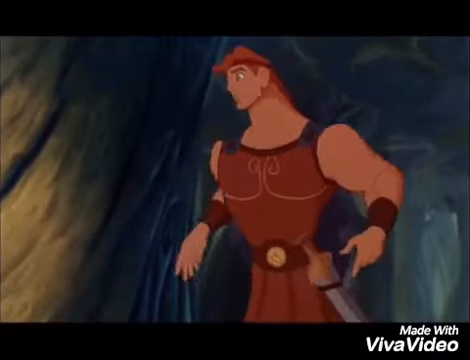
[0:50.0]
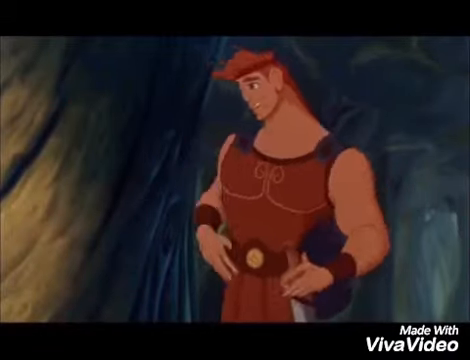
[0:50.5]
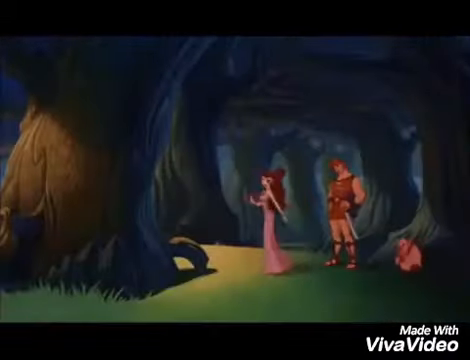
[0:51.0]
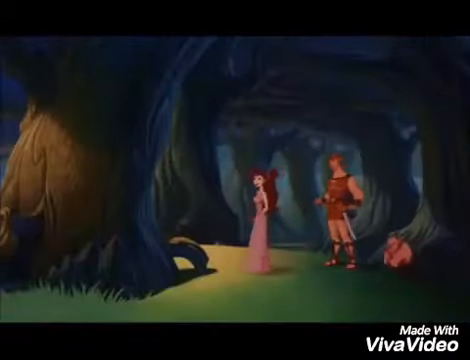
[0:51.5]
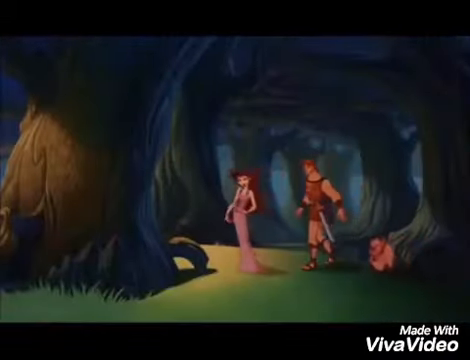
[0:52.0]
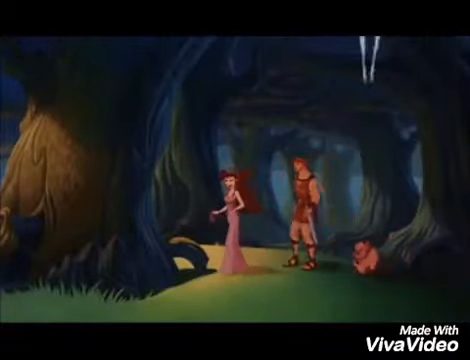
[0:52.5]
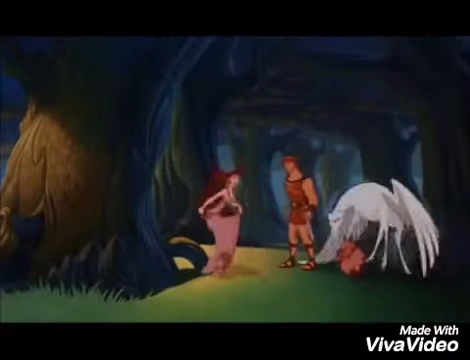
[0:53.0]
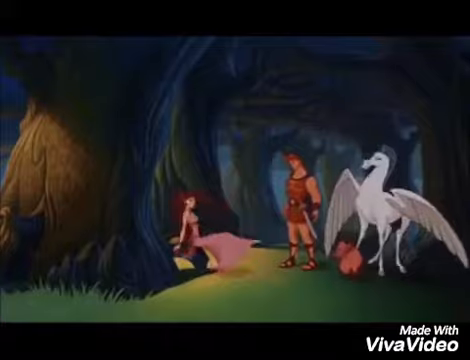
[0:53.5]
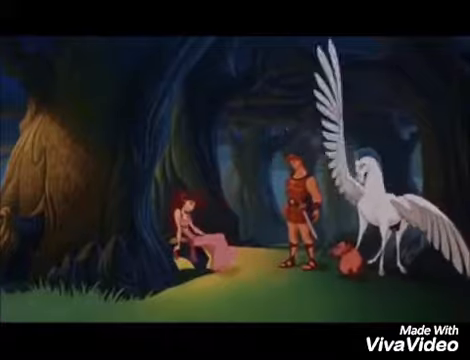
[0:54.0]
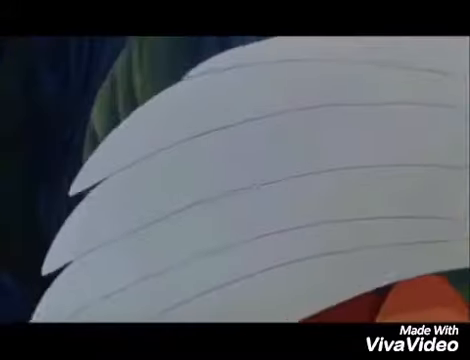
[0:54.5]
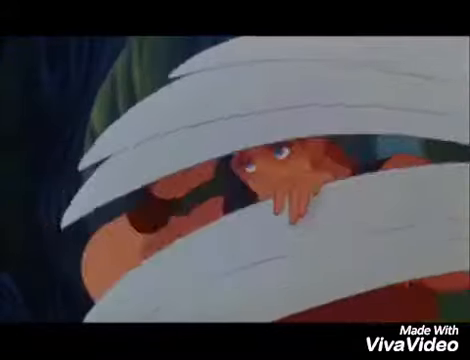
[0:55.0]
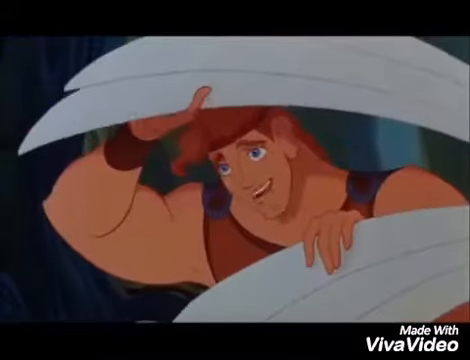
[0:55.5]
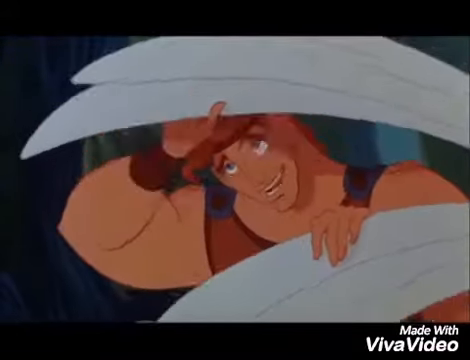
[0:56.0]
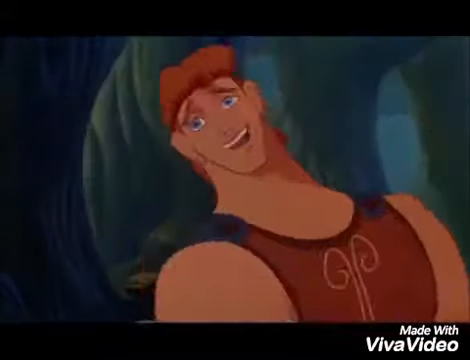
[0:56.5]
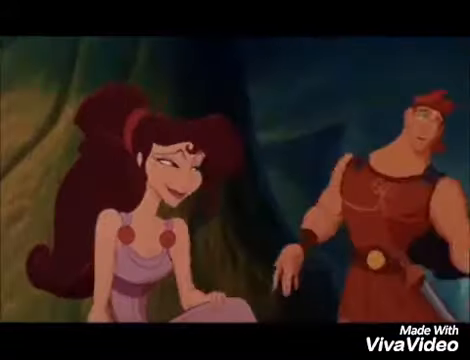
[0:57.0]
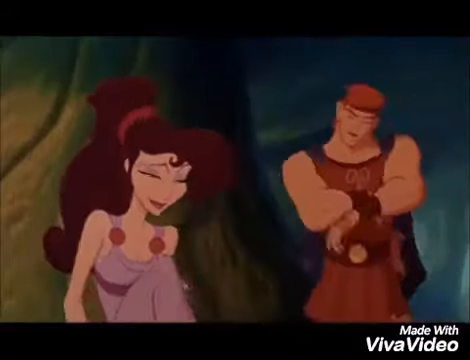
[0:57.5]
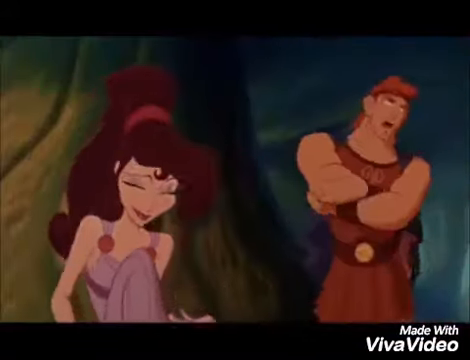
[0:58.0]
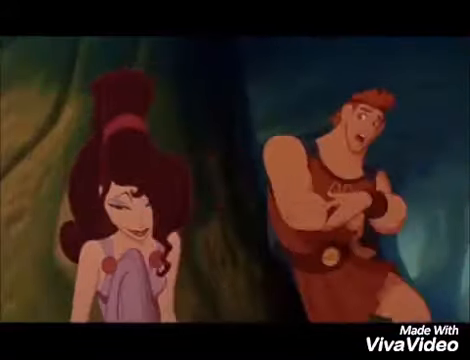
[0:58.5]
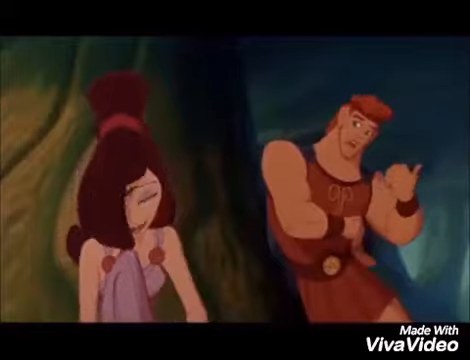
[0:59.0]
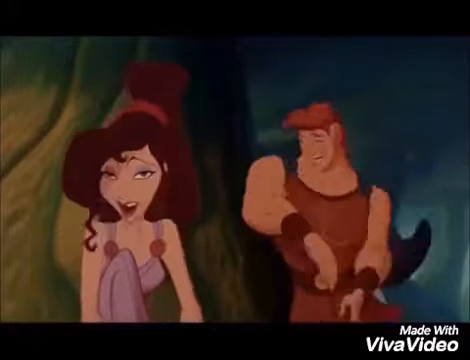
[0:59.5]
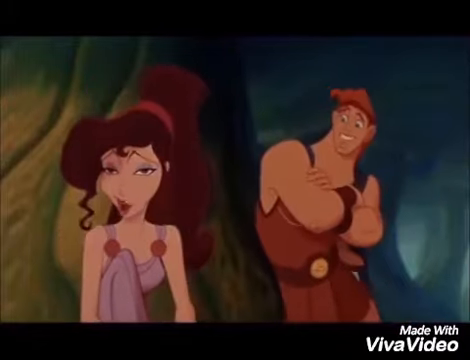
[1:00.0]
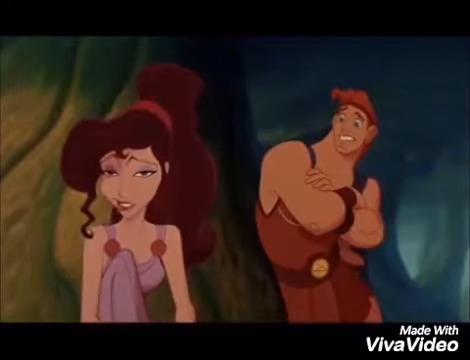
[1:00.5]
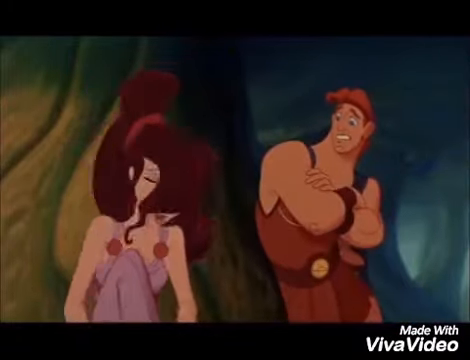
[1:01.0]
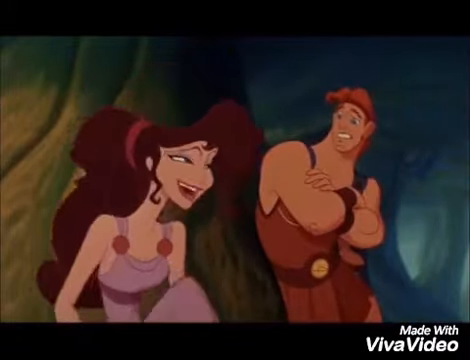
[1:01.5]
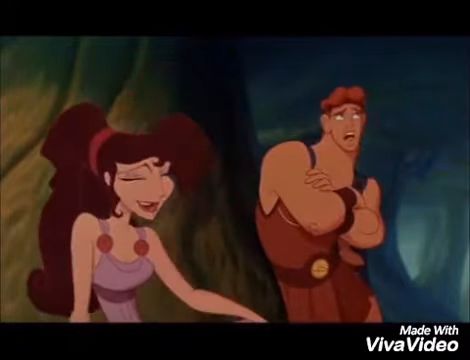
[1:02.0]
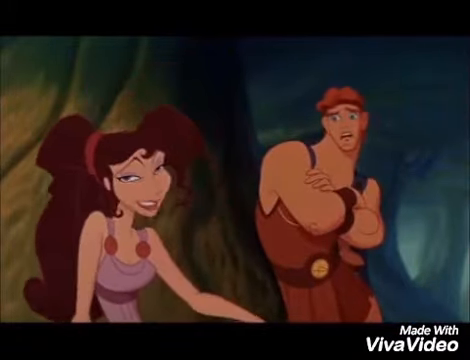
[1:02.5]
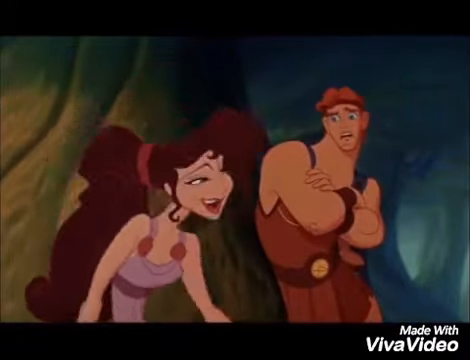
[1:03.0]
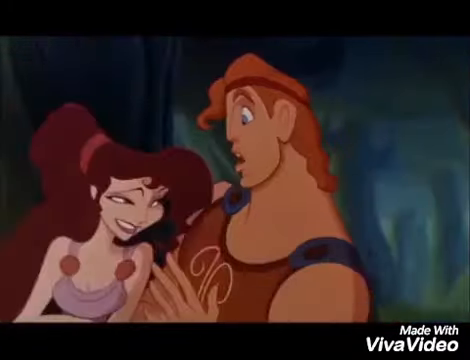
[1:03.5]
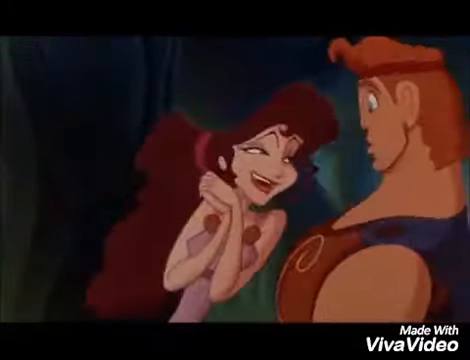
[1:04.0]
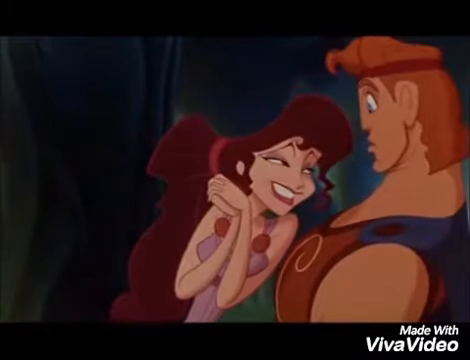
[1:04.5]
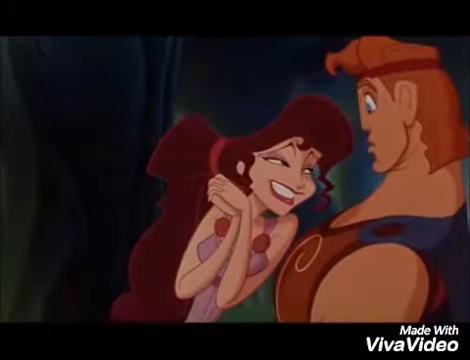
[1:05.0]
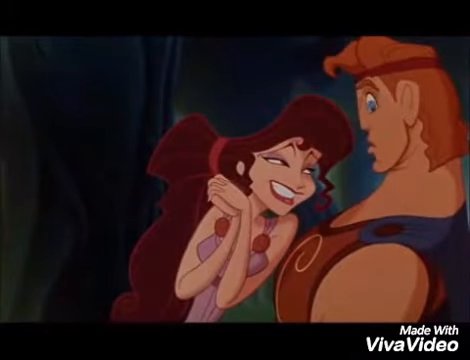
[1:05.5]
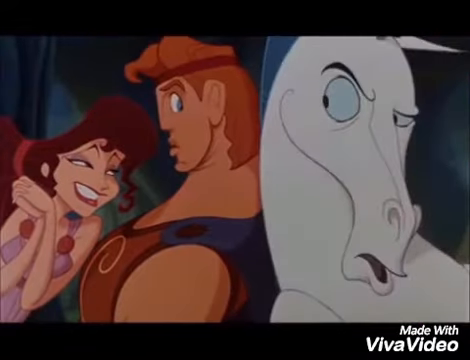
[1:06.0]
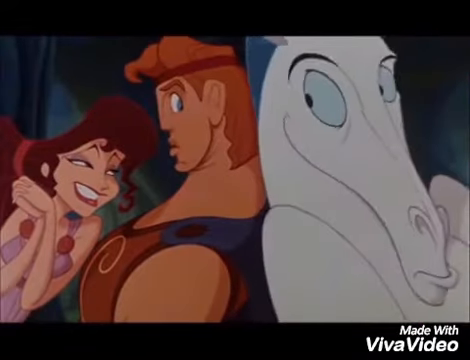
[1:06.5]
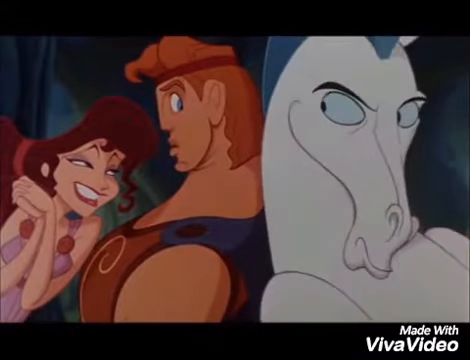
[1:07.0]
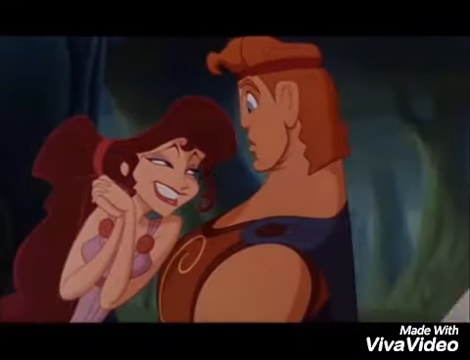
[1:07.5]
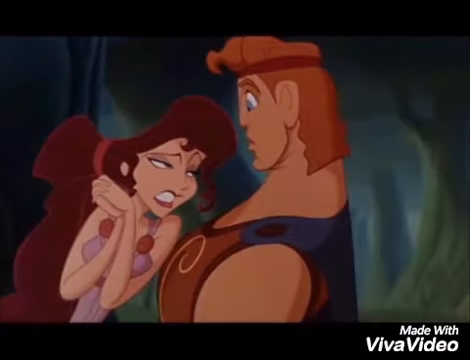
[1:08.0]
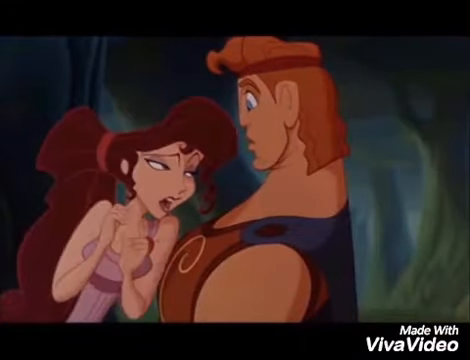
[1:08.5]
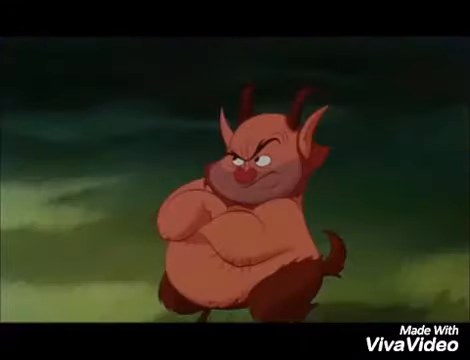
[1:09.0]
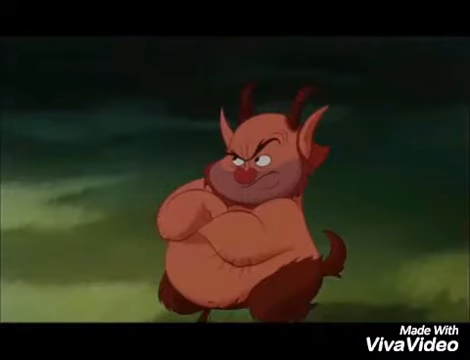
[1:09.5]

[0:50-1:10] The beautiful lady, with dark brown skin, long hair and a long gown, talks to the guy, who also has dark brown skin and a very good hairstyle and has a sword beside him as he walks toward her. The lady is about to sit down; before she does, the horse with the wings and the mohawk flies right behind the guy and covers his face with its wing. The guy pulls the wing aside with his hand and goes to meet the lady, resting his back on the tree she is sitting on. They have some kind of conversation; the lady smiles and the guy looks surprised or shocked. The lady stands up, moves closer to the guy and tries to push him away; he moves away and they keep talking. The horse leans back and rests on the guy, seemingly trying to eavesdrop and listen to their conversation, but the guy rolls his eyes back, looks shocked or afraid, makes a very angry face and moves back. The creature with horns and a beard stands there with his arms crossed, kind of angry.